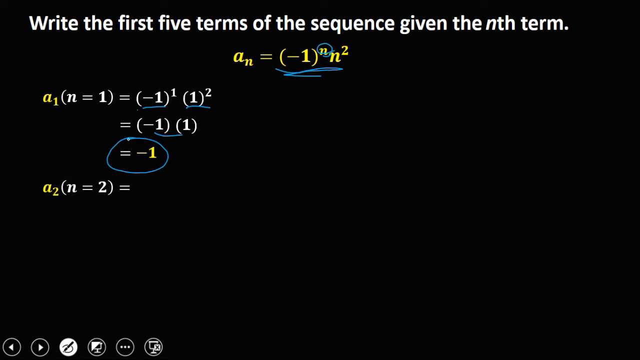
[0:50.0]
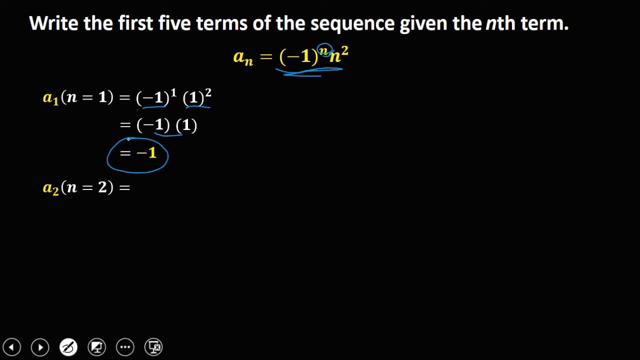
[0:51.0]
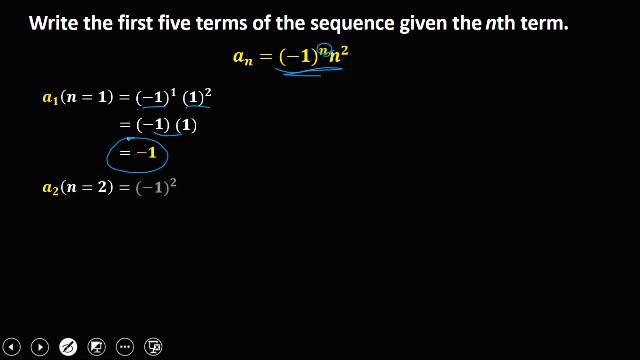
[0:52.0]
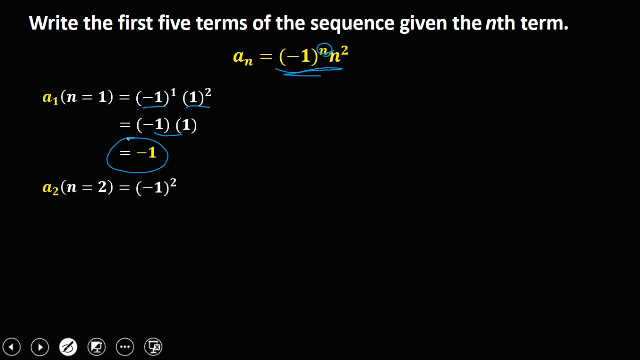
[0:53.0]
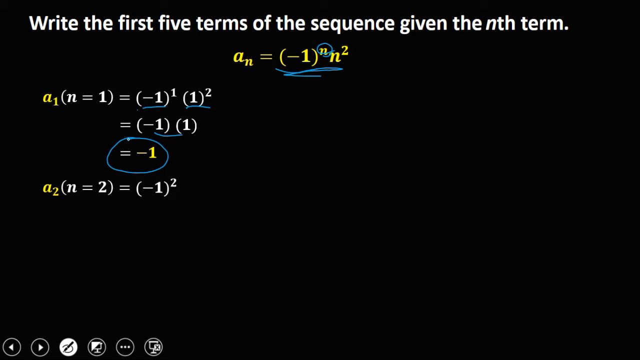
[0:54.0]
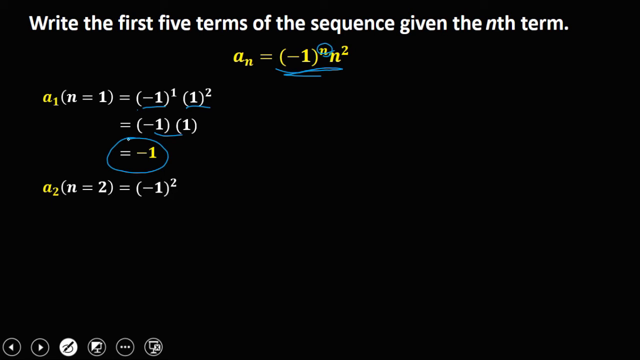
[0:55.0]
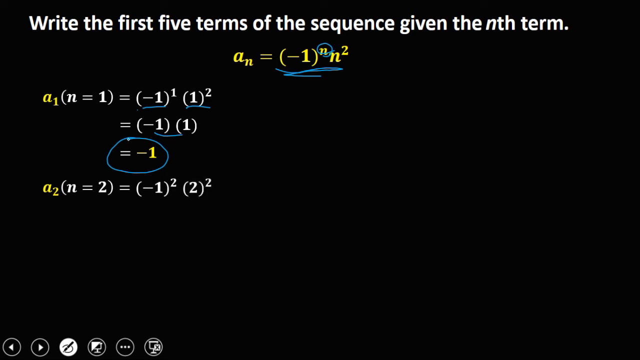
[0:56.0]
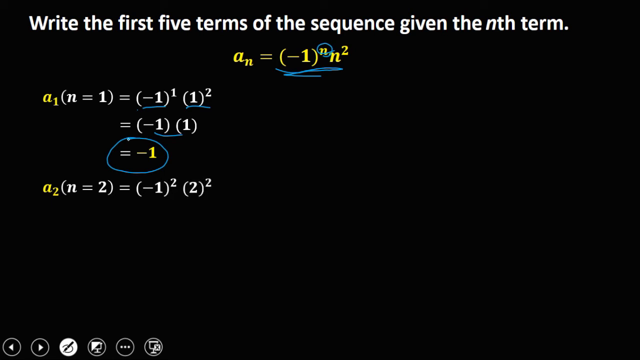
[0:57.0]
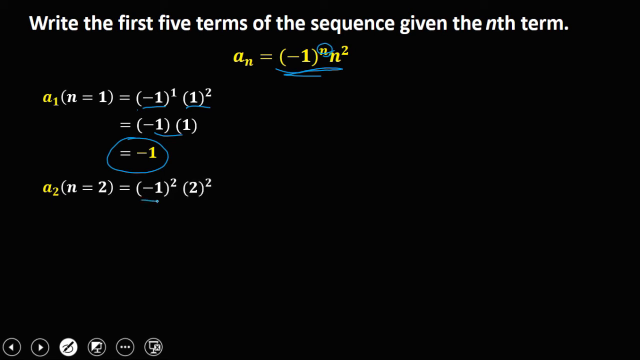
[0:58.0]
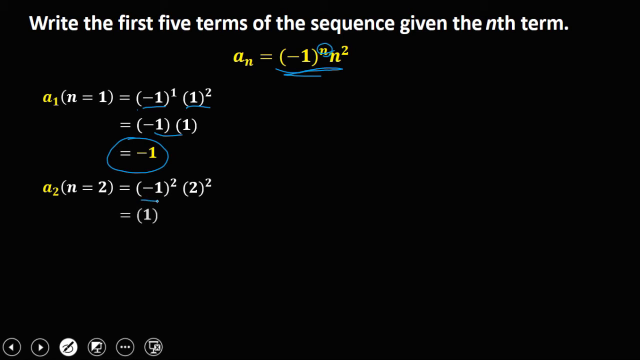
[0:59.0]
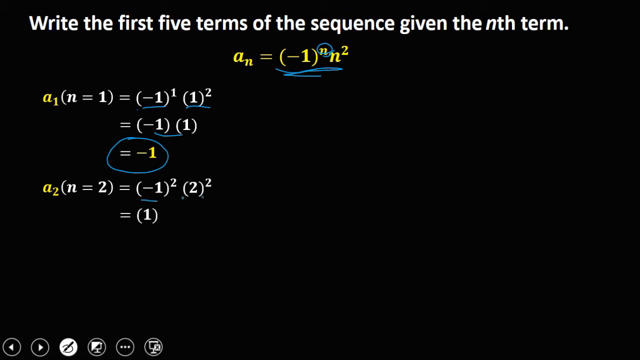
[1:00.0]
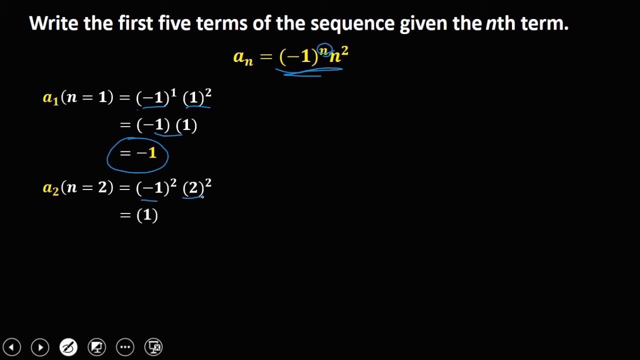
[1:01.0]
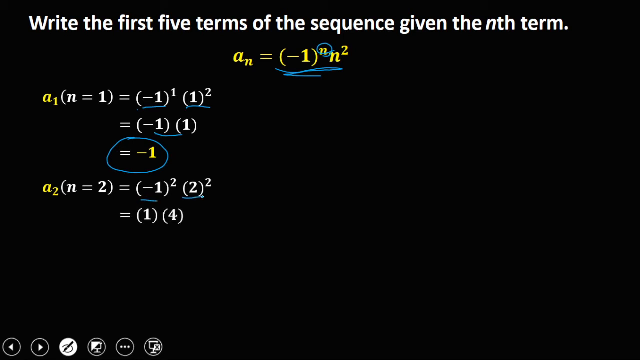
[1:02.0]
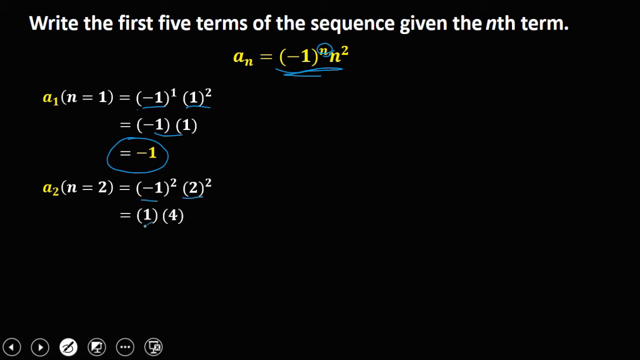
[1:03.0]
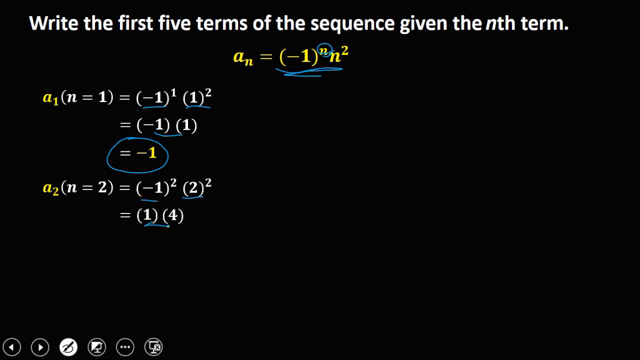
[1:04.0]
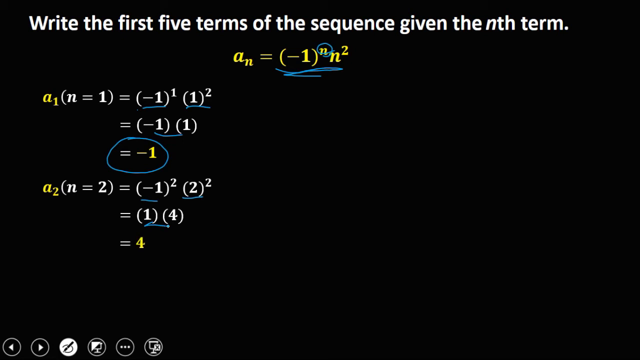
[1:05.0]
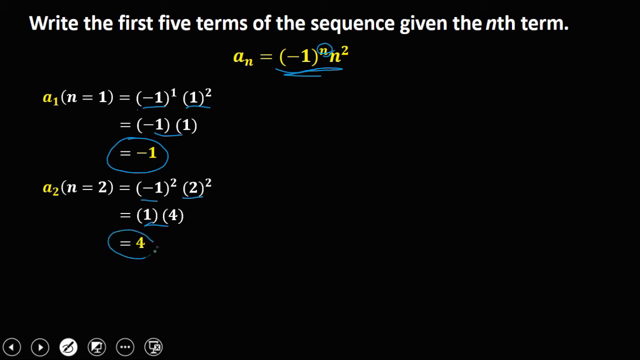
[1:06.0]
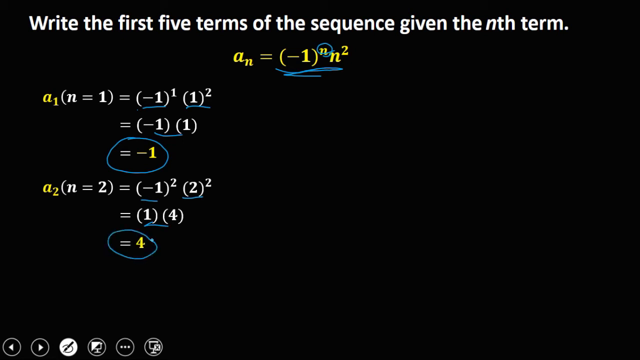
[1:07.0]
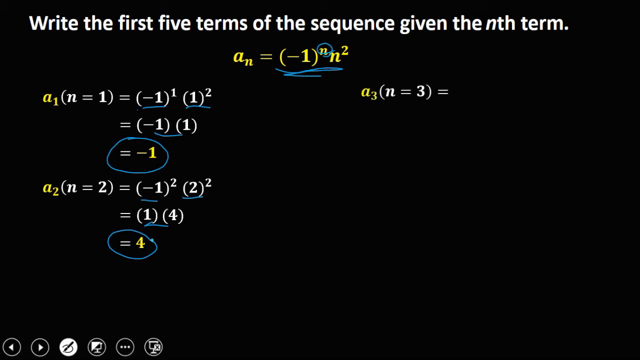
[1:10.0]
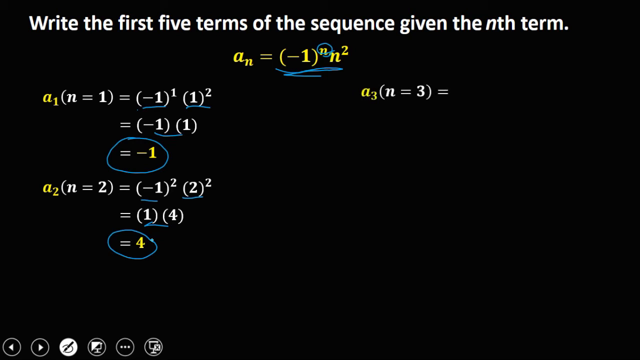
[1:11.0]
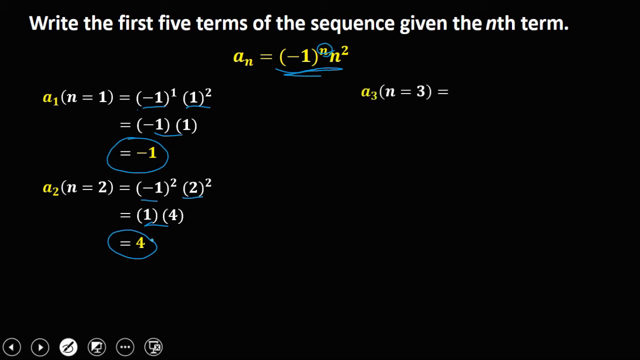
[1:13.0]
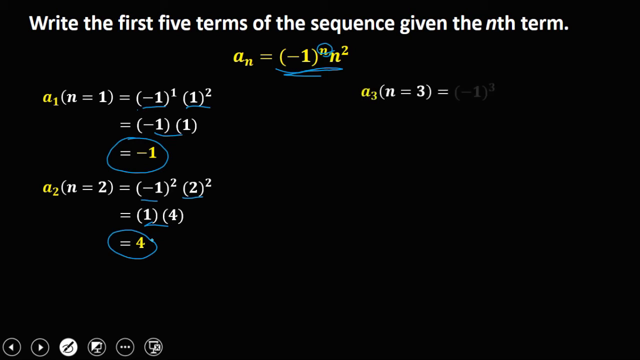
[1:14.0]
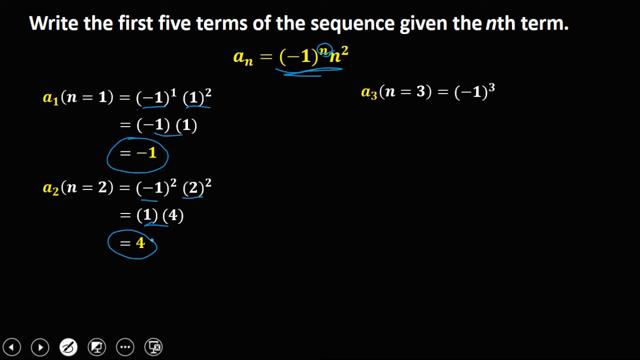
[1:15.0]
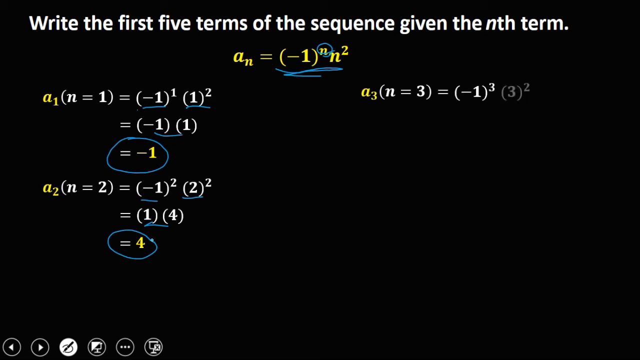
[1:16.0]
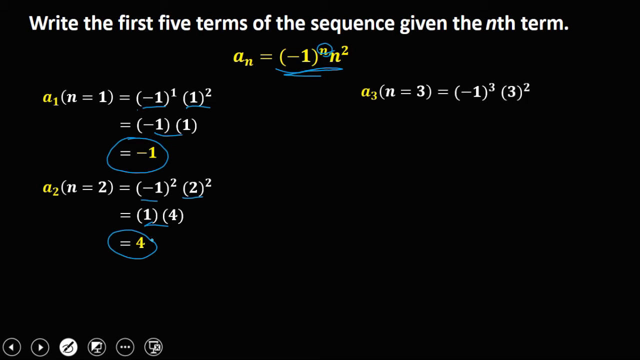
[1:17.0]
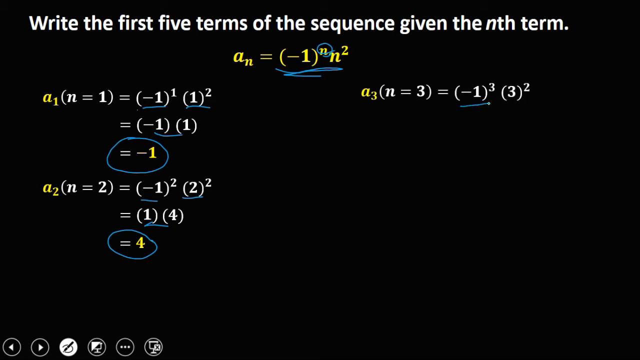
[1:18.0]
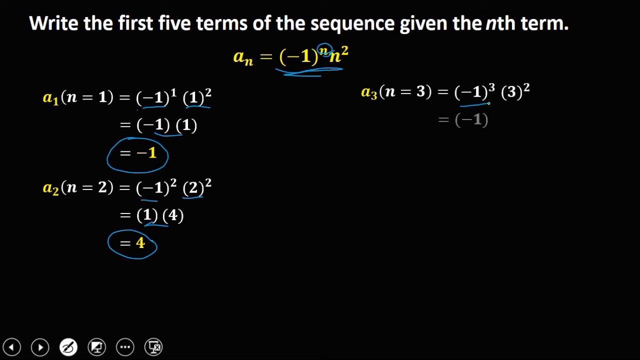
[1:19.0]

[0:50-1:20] Using the rule a subscript n equals negative one to the nth power multiplied by n squared, the tutorial works through a subscript 2 (n = 2). This equals negative one to the second power multiplied by two squared. Negative one to the second power is negative one times negative one, which is one, and two squared is four, so one multiplied by four equals four. The second term is four.